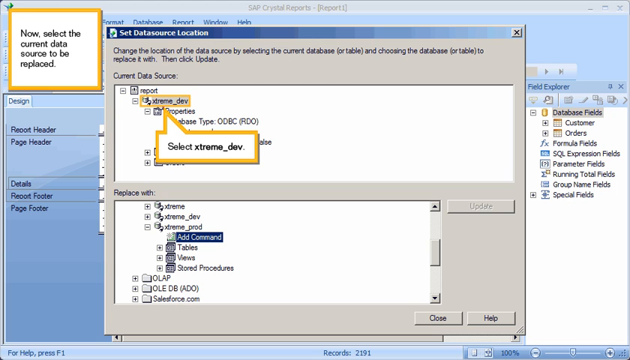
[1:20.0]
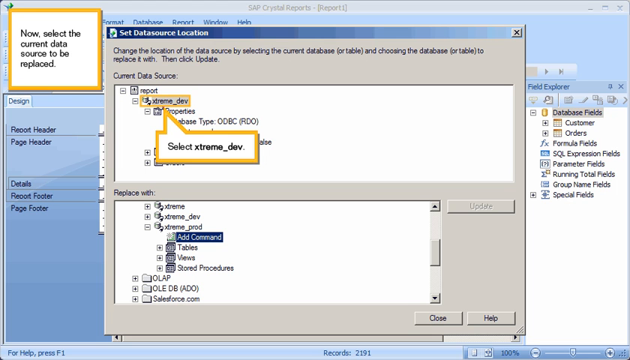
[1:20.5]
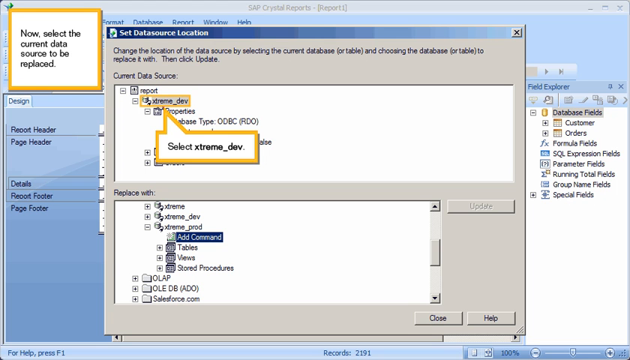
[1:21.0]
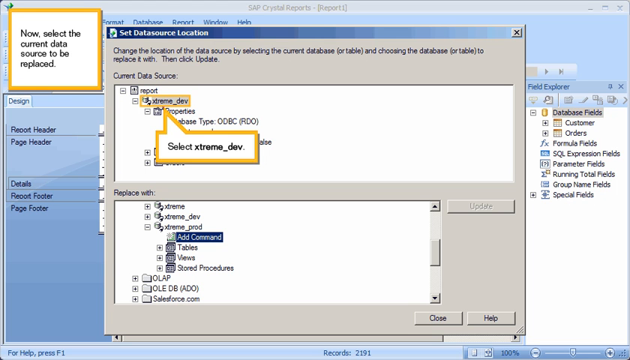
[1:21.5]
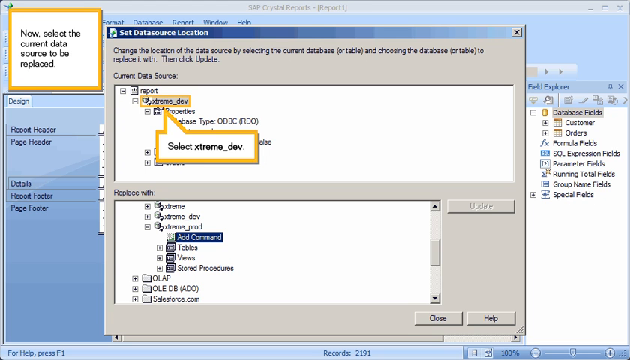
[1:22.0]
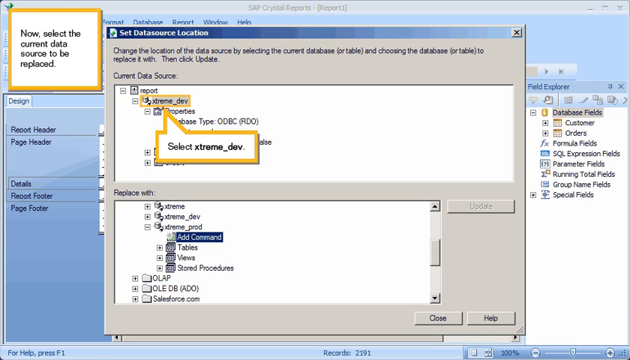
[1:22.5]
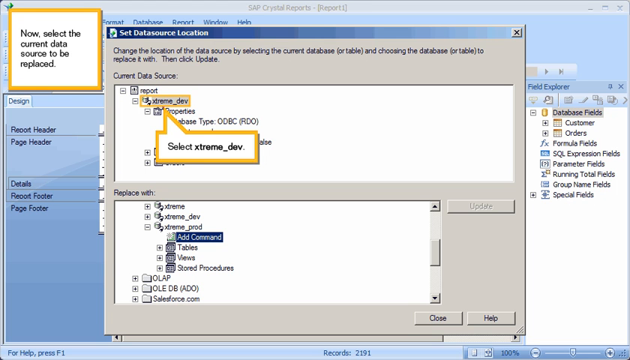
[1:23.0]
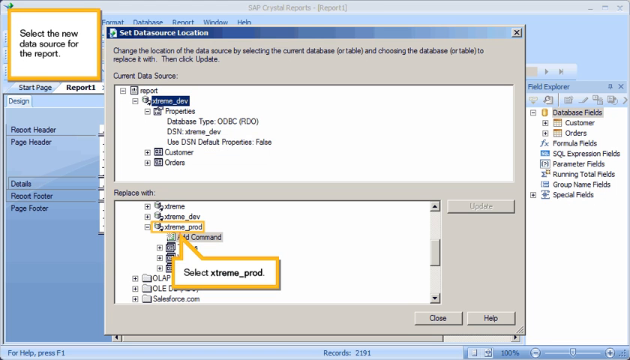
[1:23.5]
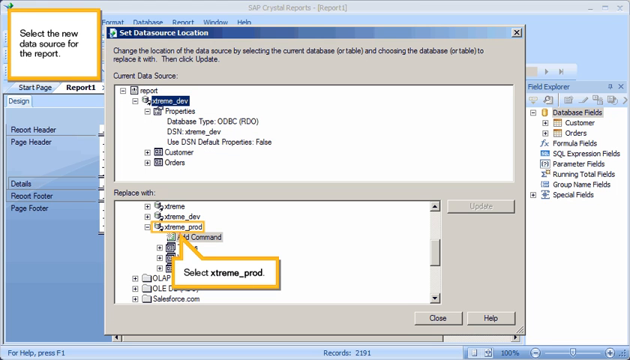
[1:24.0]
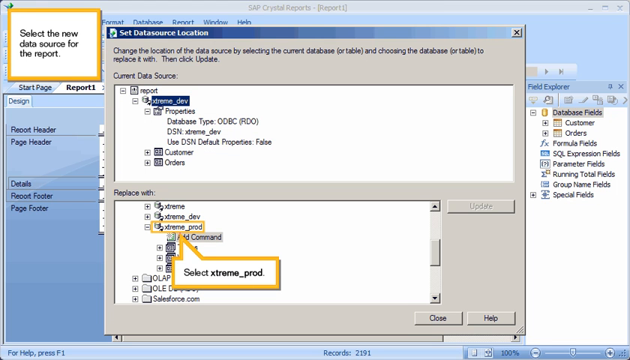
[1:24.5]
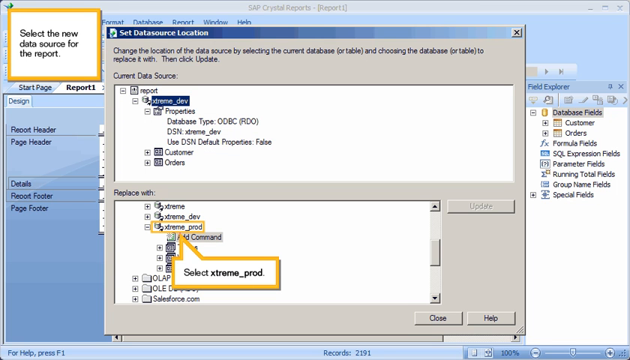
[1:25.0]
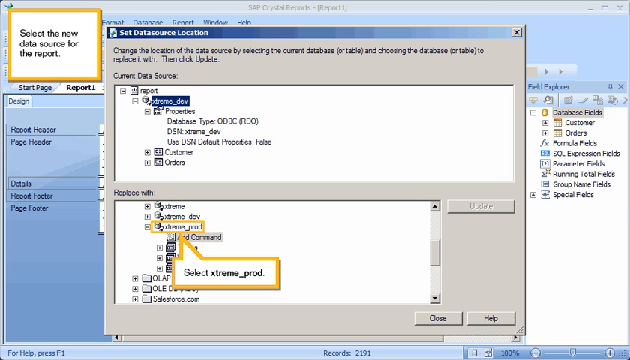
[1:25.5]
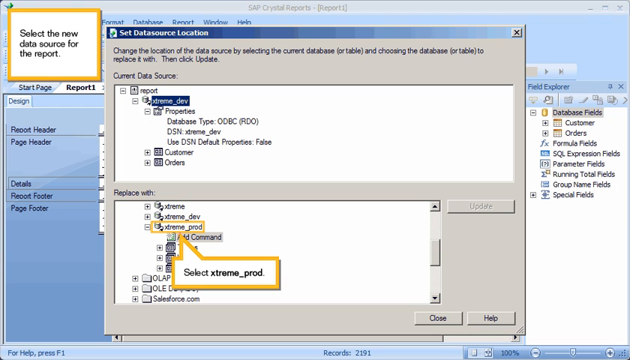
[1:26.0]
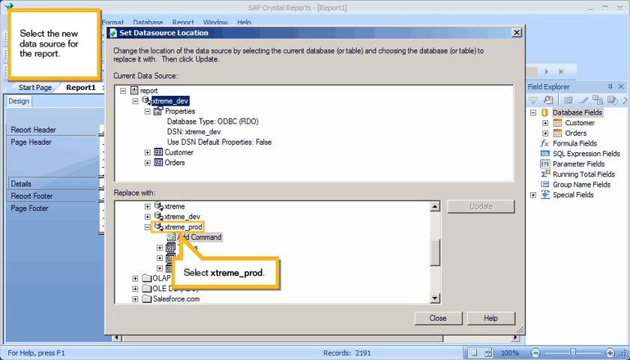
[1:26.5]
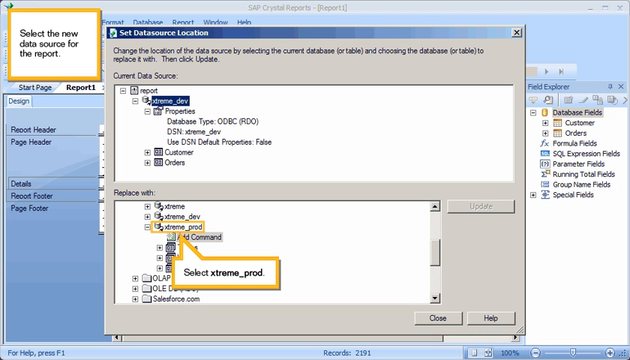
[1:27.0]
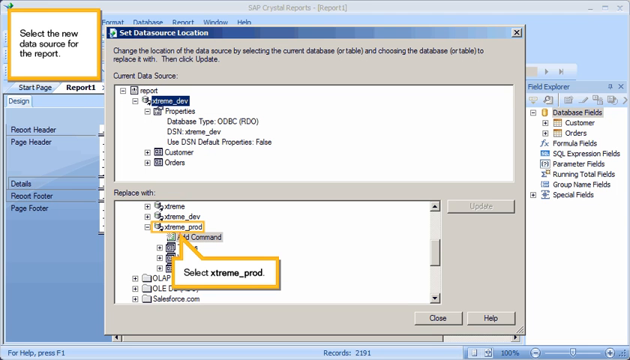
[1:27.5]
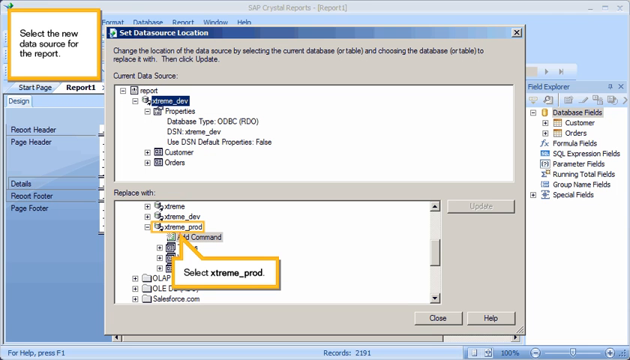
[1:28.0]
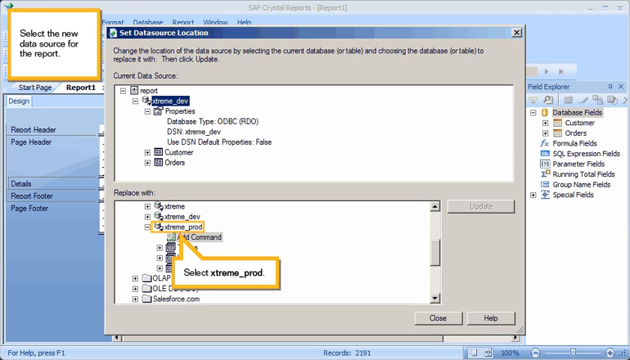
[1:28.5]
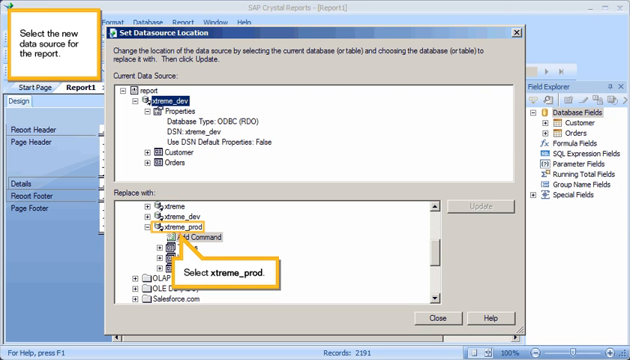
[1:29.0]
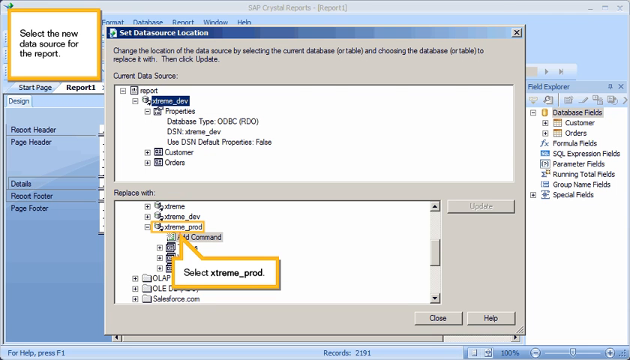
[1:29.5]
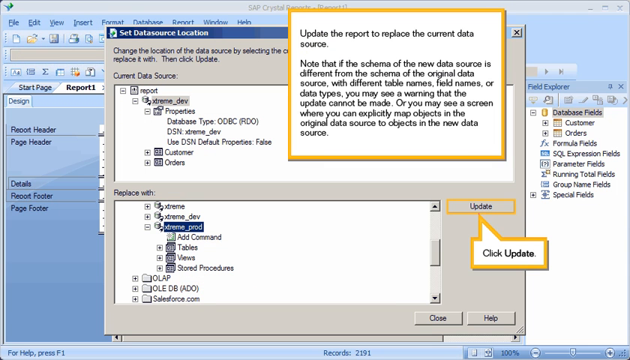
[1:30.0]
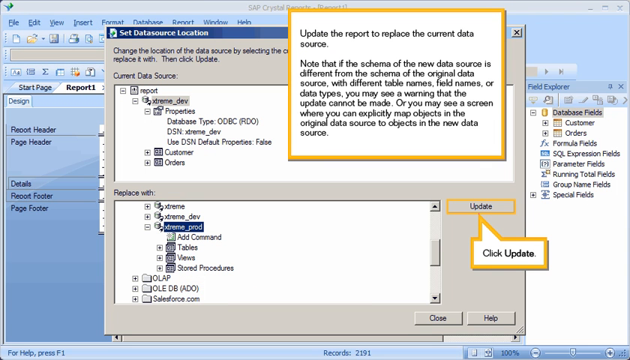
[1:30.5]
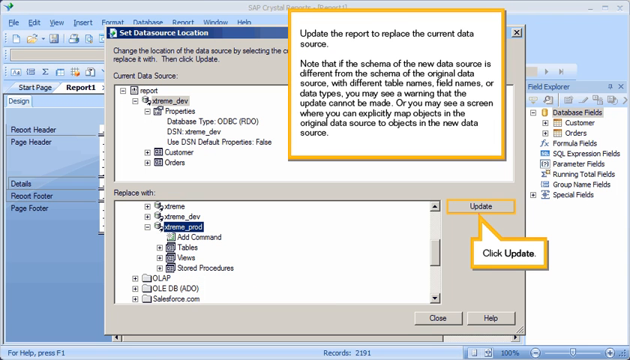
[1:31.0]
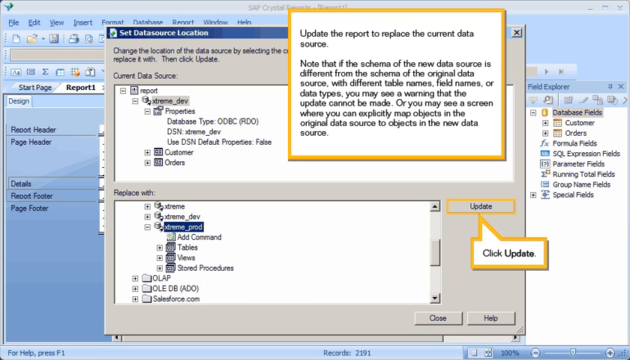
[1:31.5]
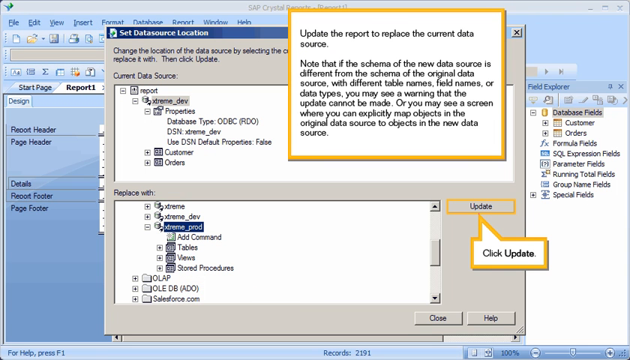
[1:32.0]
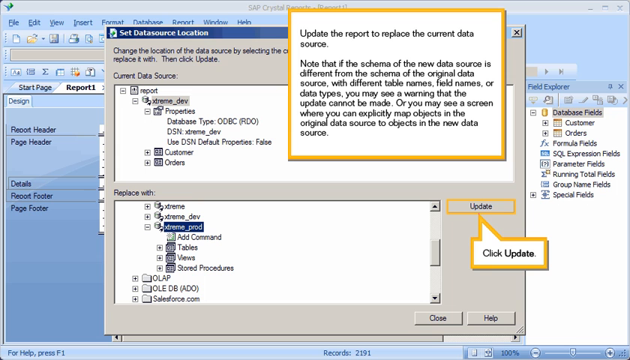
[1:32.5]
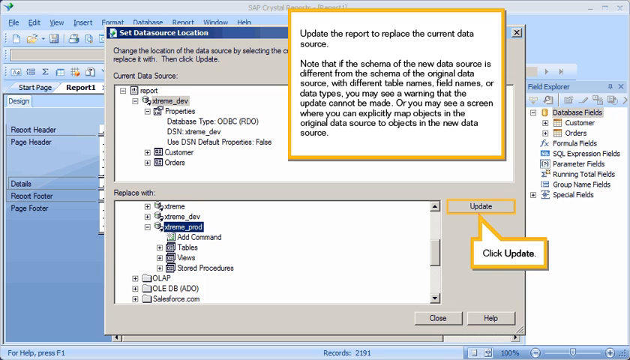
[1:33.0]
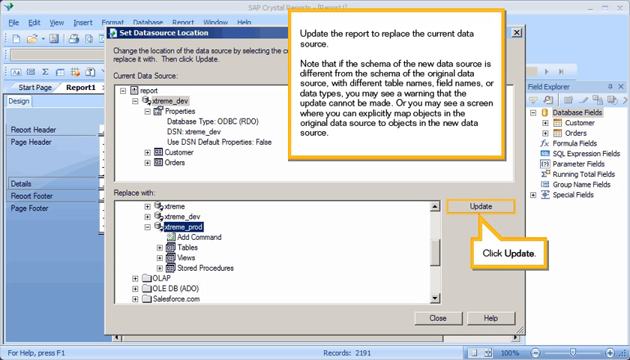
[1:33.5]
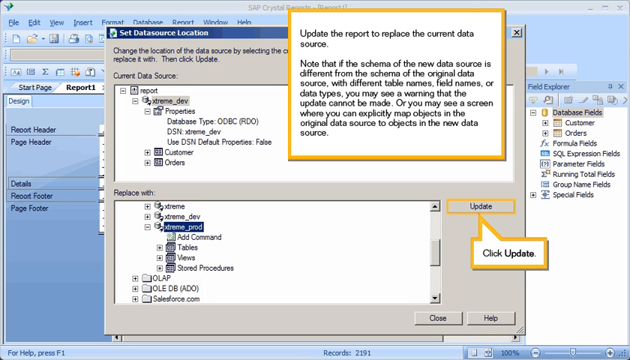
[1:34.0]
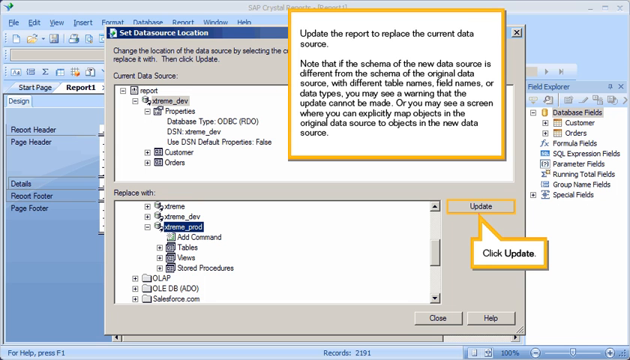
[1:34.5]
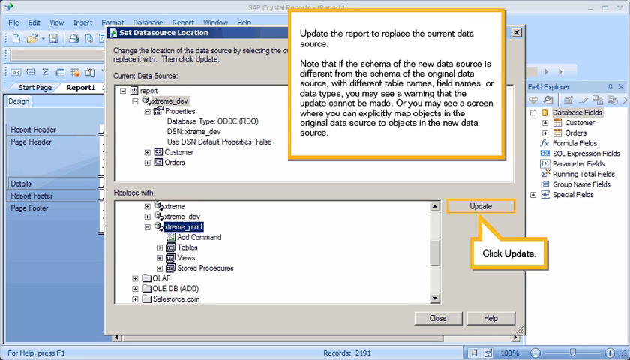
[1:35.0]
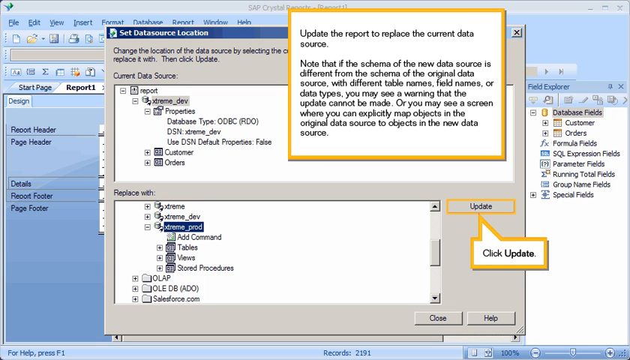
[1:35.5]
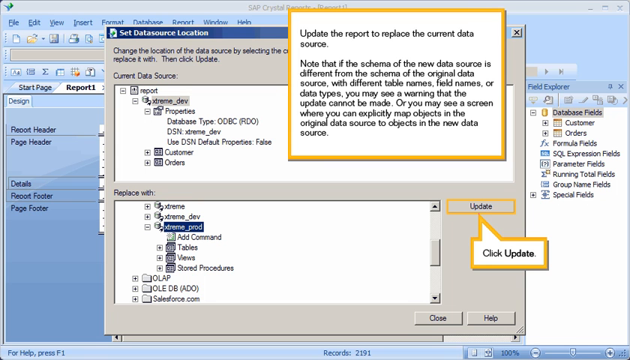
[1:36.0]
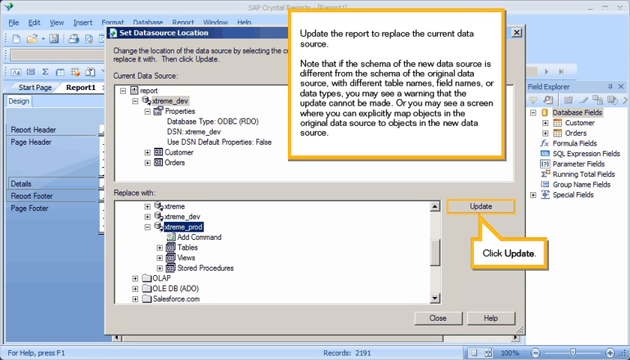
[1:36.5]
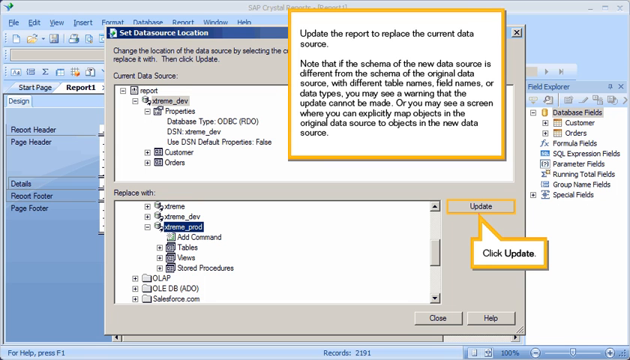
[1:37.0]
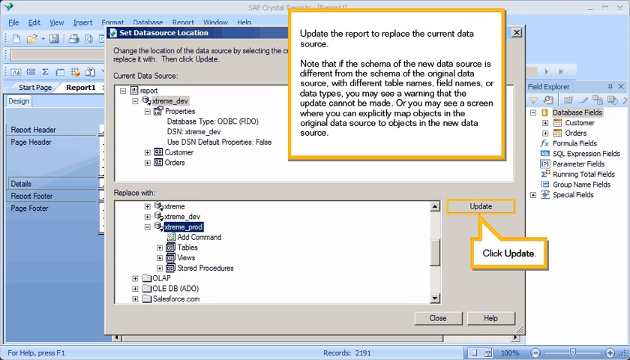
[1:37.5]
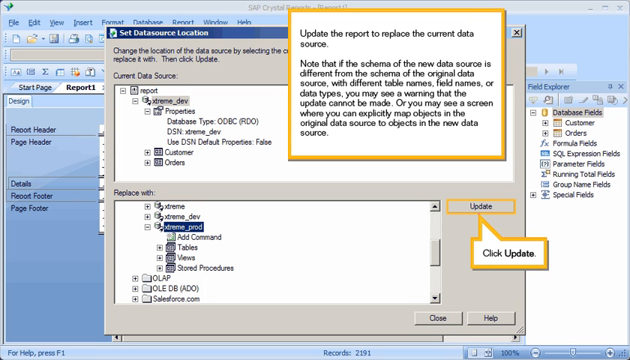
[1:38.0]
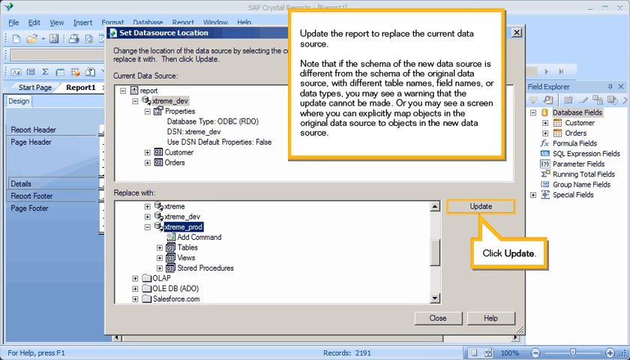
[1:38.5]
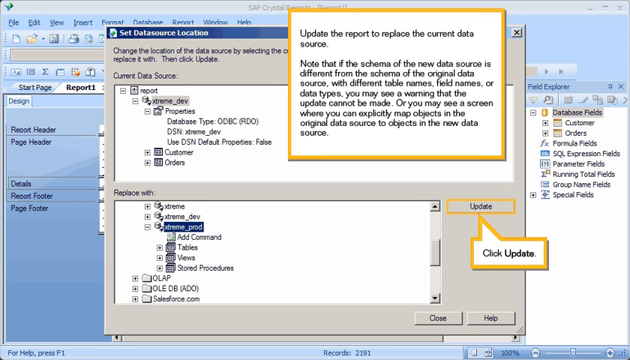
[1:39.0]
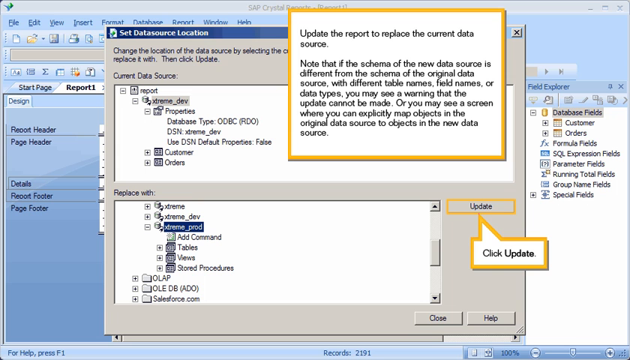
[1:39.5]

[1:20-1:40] The white text box framed in yellow in the upper left-hand corner says "now select the current data source to be replaced." In the program's dialog box, the top line says "report," and below it "extreme dev" is highlighted in gray and framed in yellow, with a white yellow-framed box saying "select extreme dev." Further commands below appear to be inconsequential. The dialog box moves below, where the next line lists extreme, extreme dev, extreme prod, and the box says "select extreme prod." A new white dialog box framed in yellow appears, reading: "update the report to replace the current data source. Note that if the schema of the new data source is different from the schema of the original data source with different table names, field names, or data types, you may see a warning that the update cannot be made, or you may see a screen where you can explicitly map objects in the original data source to objects in the new data source." A second, smaller box framed in yellow says "click update."